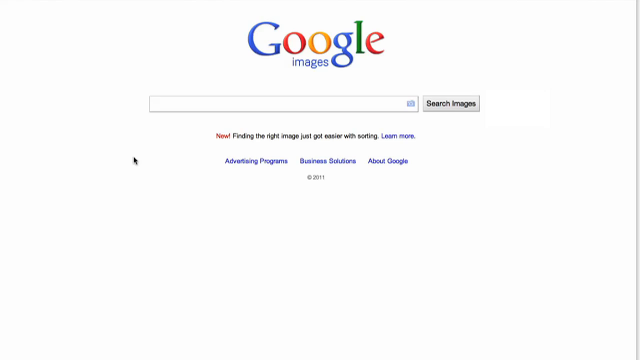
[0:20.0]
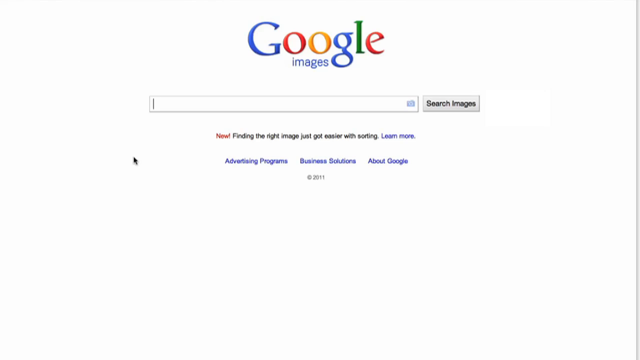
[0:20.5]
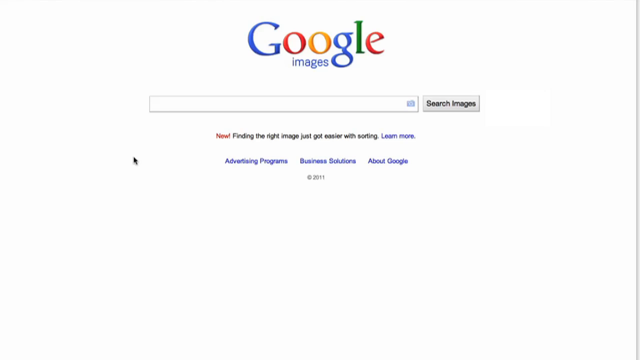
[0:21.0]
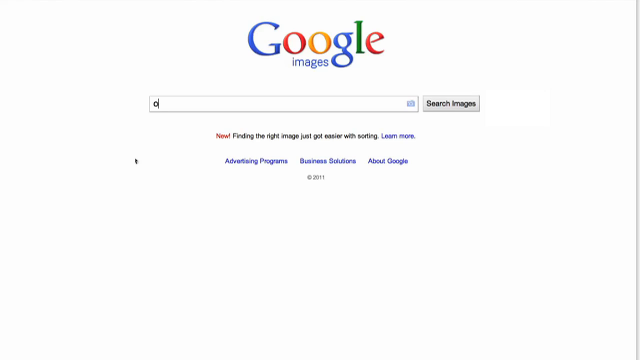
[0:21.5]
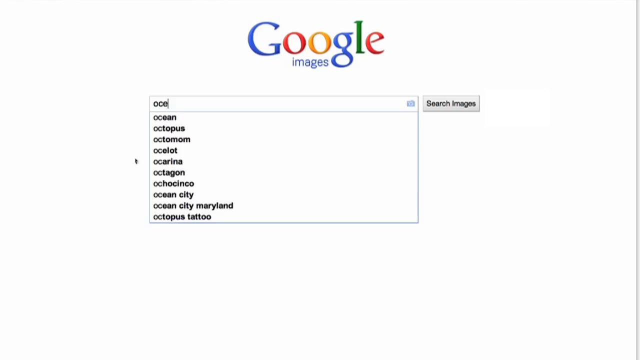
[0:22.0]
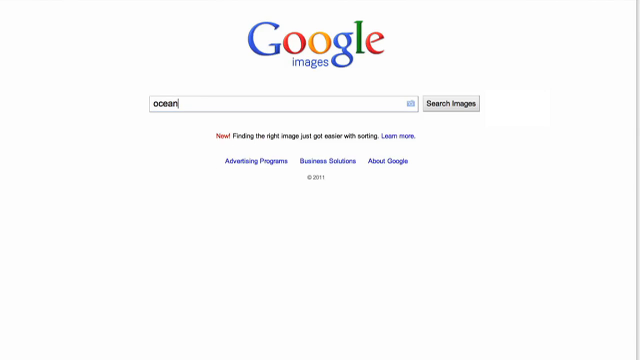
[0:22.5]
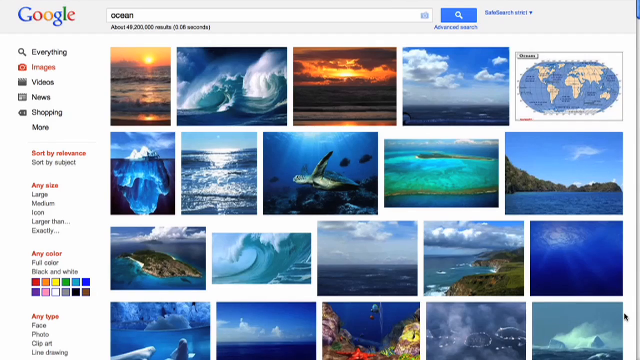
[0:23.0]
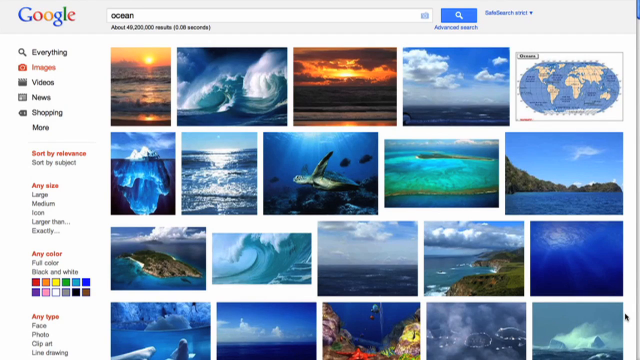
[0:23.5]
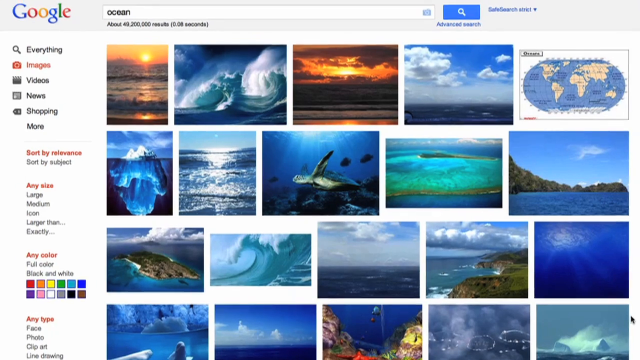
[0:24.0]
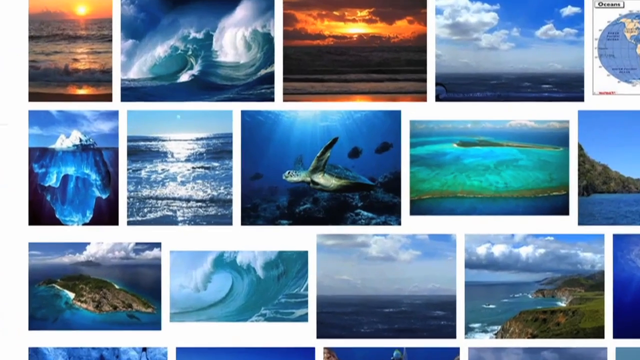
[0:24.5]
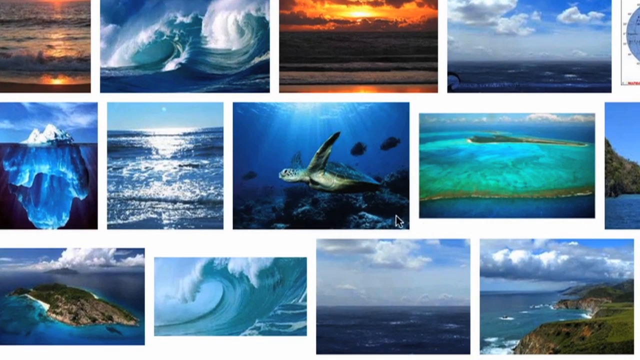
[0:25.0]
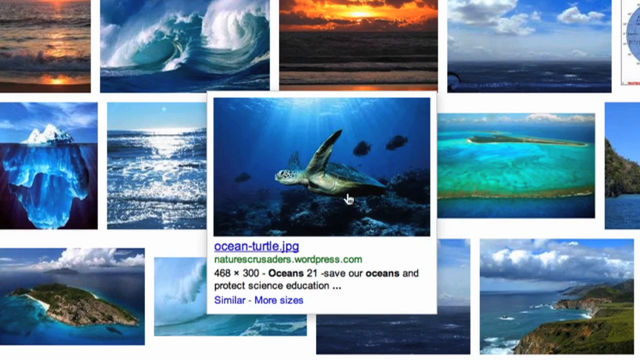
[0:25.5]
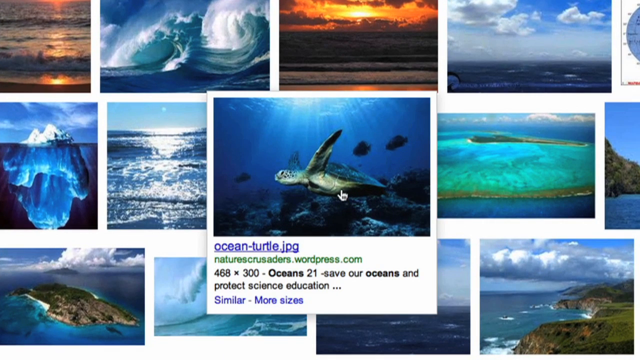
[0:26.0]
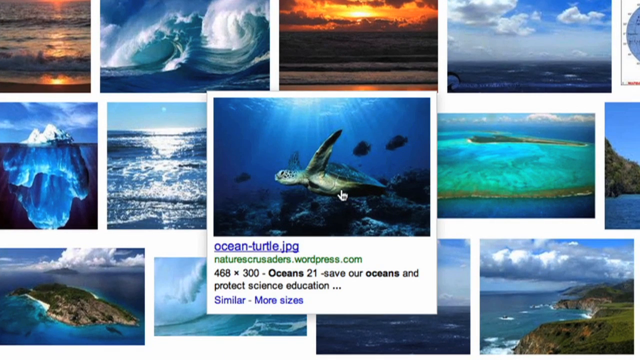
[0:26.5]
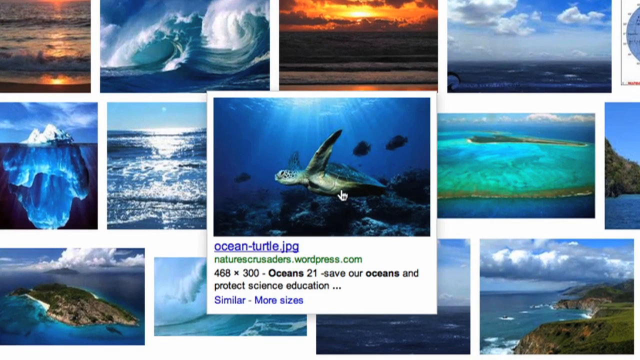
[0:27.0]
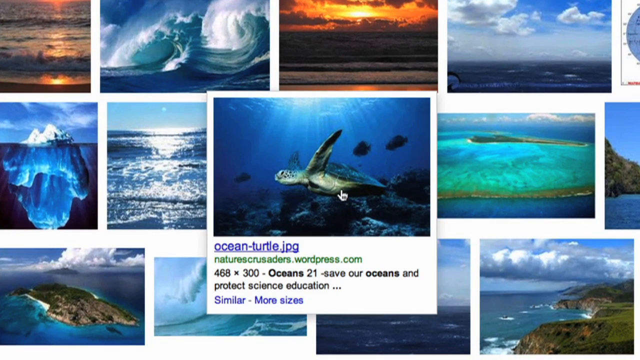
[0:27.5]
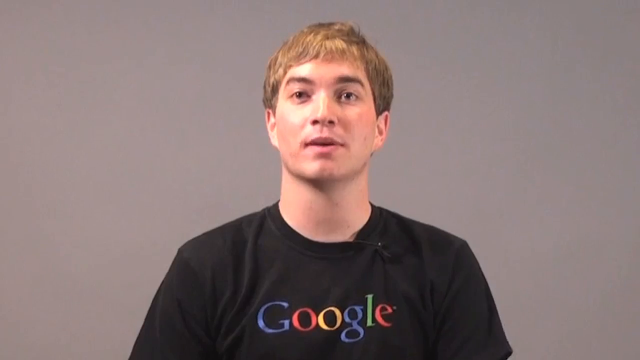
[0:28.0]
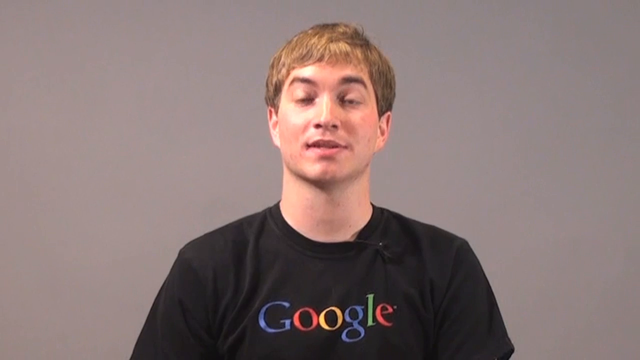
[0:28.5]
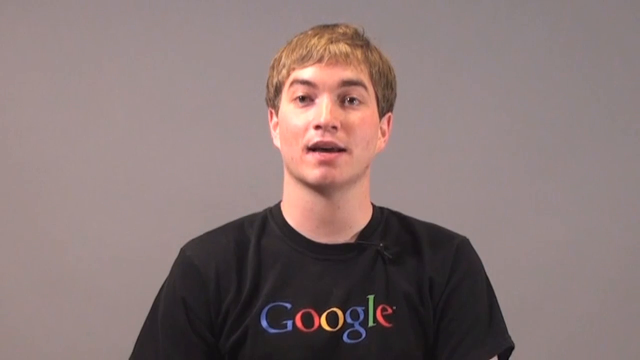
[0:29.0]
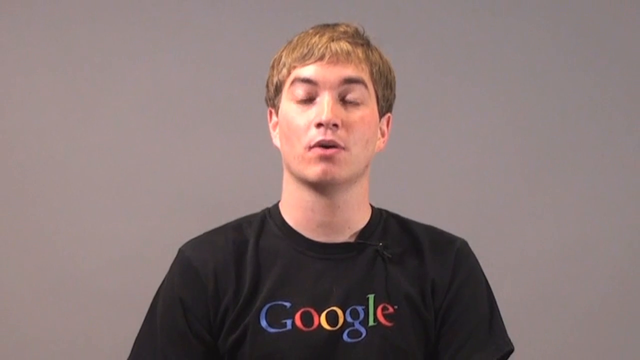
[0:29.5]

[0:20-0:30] The Google Images web page appears, with the Google Images logo. Below it is a white search bar with slight gray shadowing and a gray border, and next to it a light gray Search Images button with a dark gray border. Below is a basic line of text with one hyperlink, beginning with the word "new" in red. Below that are three basic footer hyperlinks, and beneath them footer information consisting of the copyright and the year. The man types "ocean" into Google Images, and the next screen shows an array of ocean images, most of them blue, along with links for videos, news, shopping and more. There are also tags for defining the color, size and relevance to search for. The cursor hovers over an image of a turtle, which enlarges.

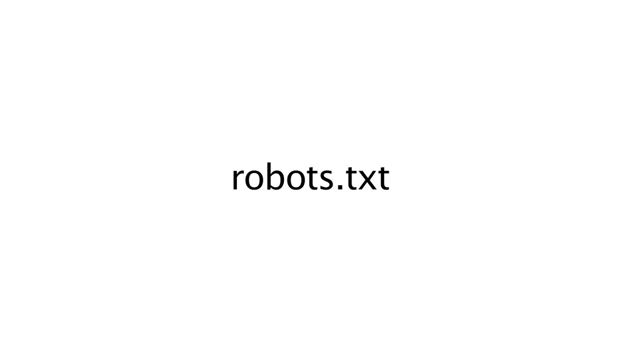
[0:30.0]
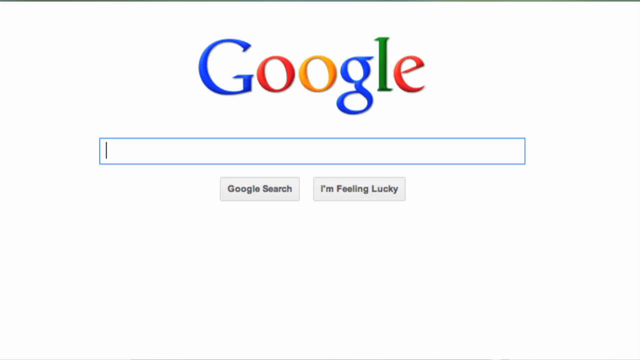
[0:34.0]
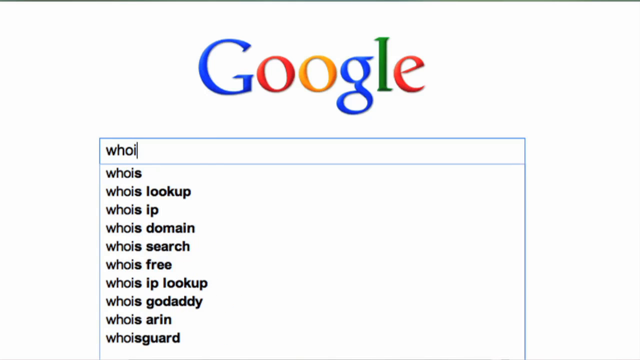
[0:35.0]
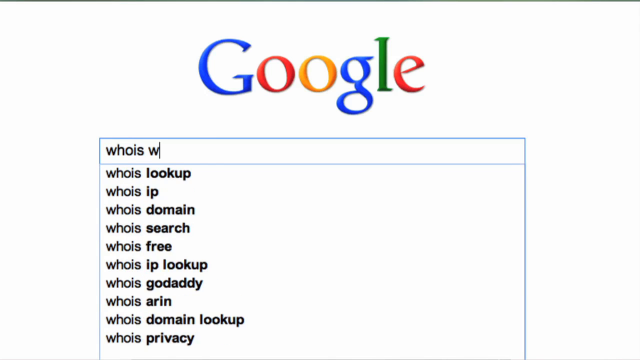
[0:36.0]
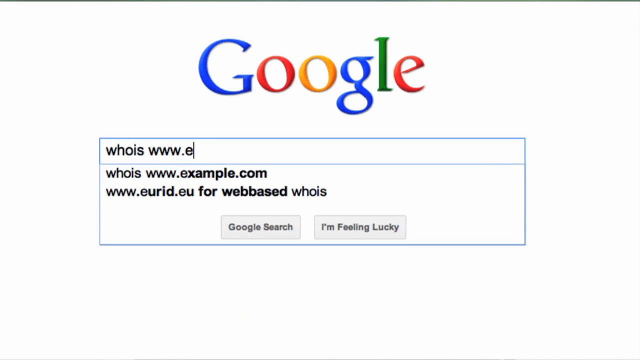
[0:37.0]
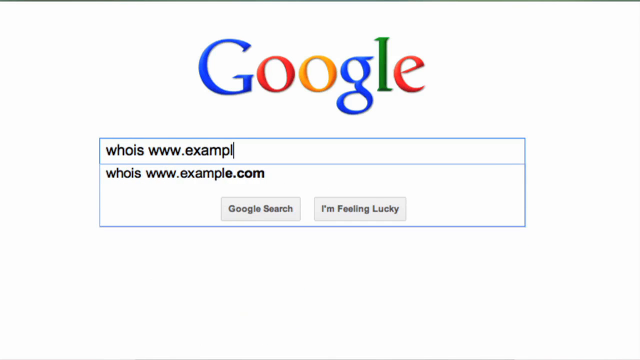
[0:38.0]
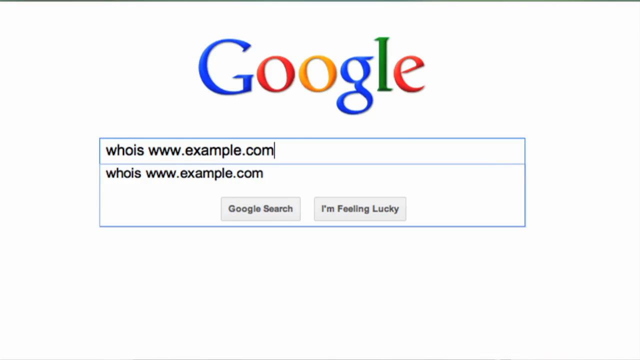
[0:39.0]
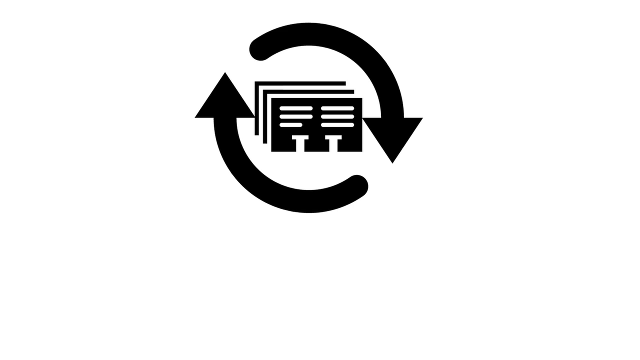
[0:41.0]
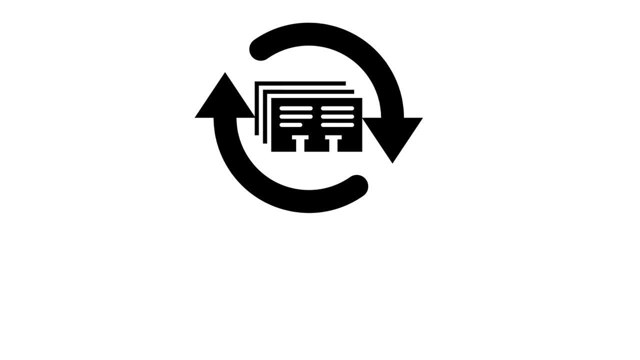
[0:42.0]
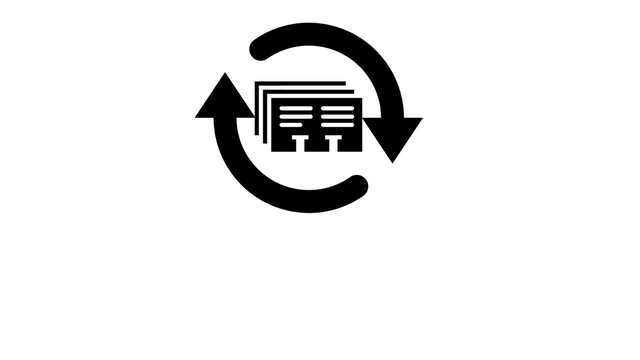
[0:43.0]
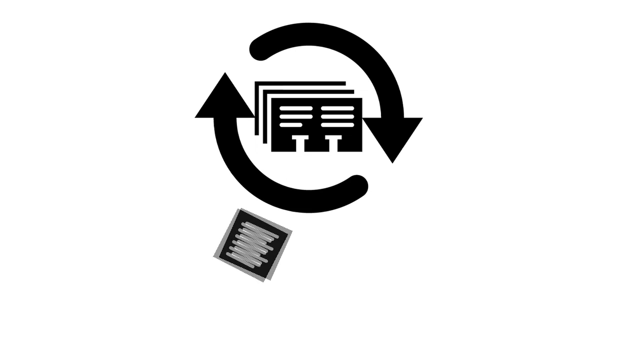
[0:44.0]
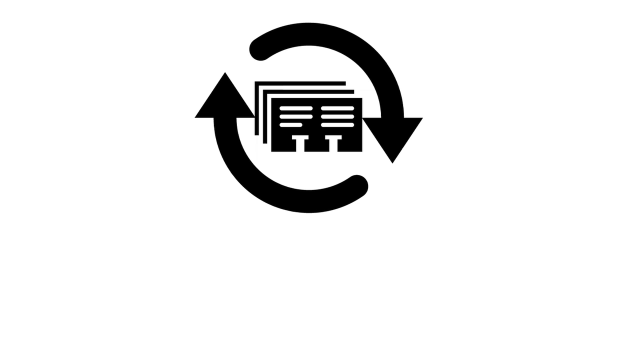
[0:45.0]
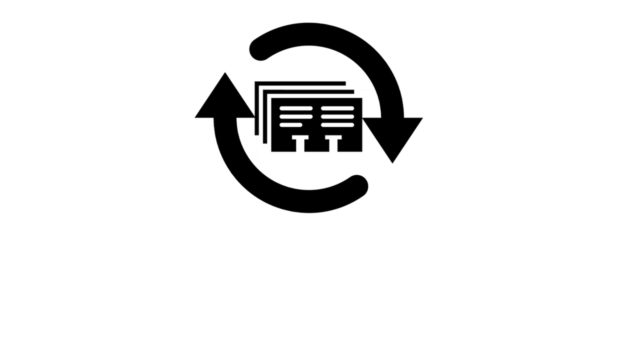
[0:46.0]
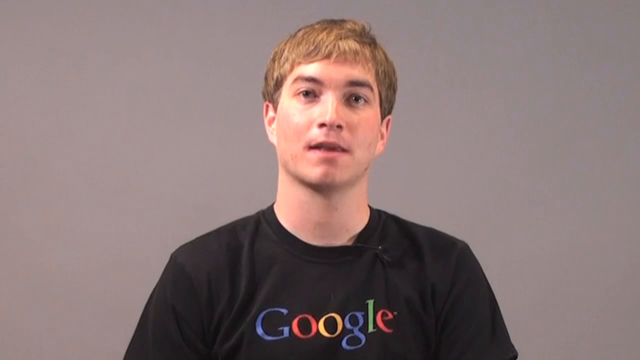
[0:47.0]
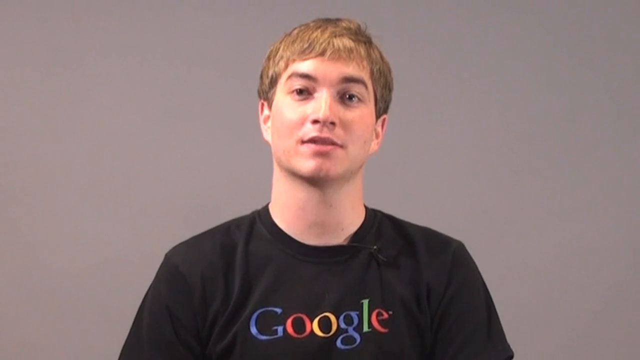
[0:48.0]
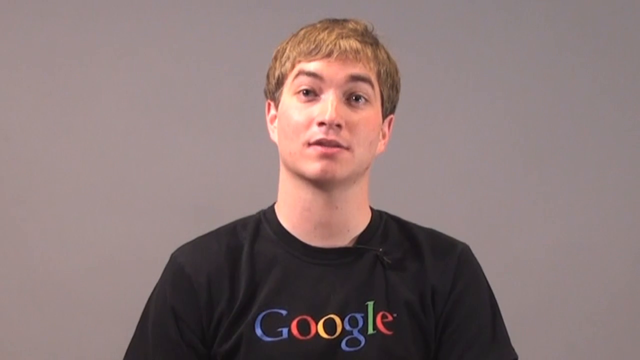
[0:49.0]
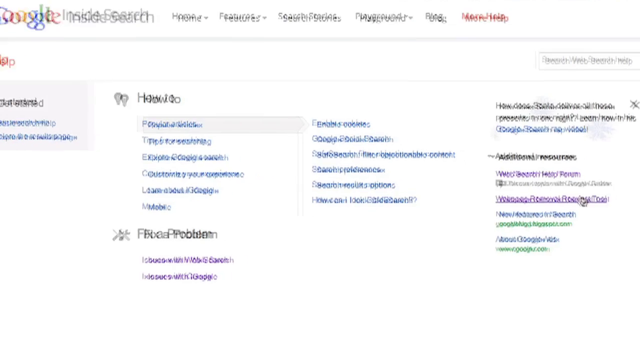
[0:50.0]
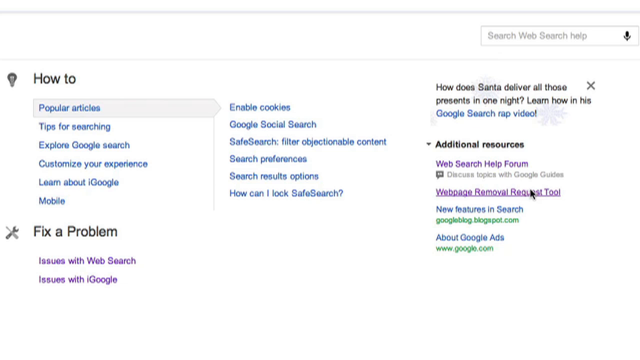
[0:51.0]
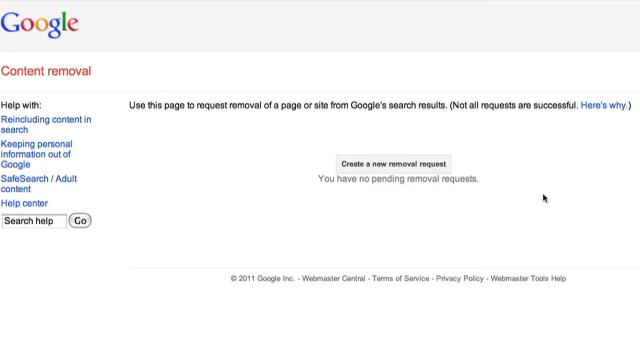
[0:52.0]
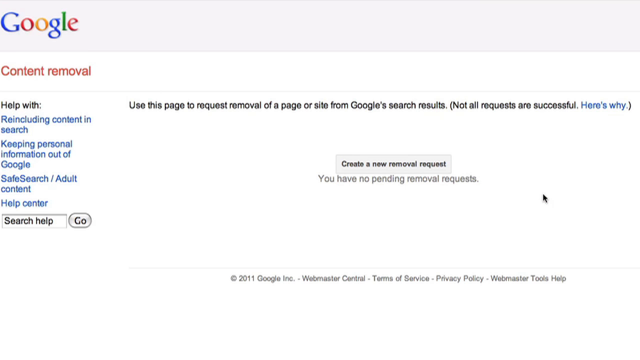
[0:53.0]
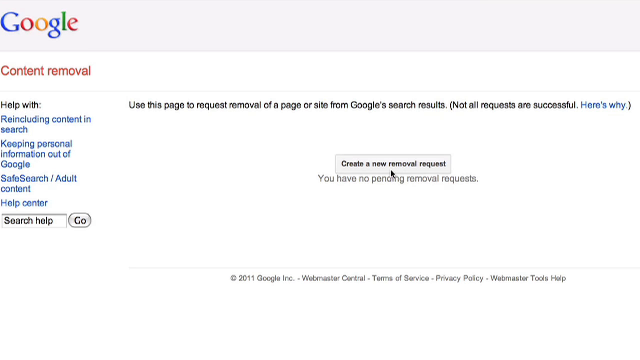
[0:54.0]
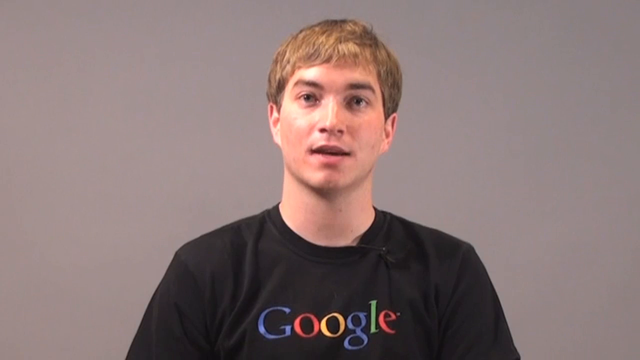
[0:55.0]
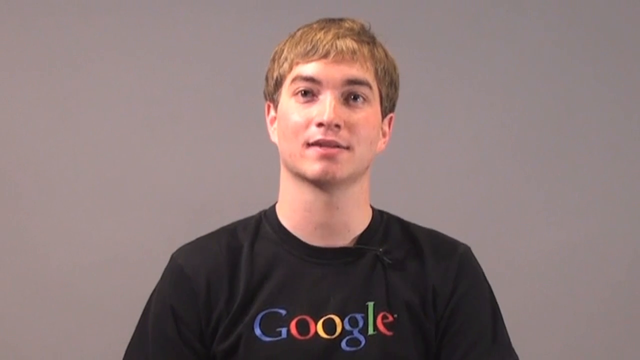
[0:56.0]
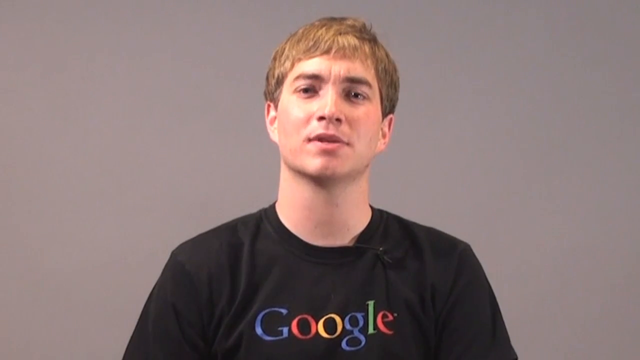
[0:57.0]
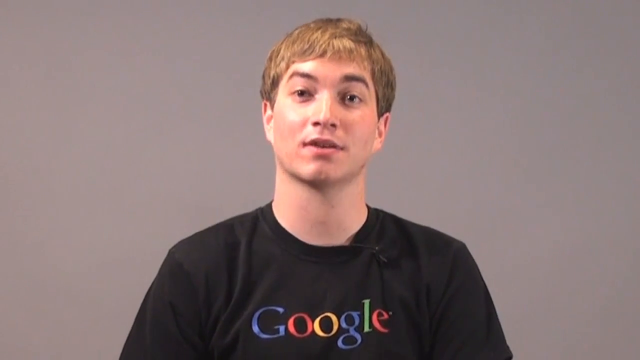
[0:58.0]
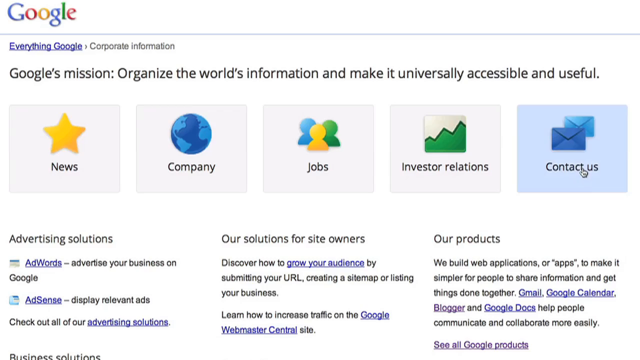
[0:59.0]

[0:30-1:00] A white screen shows the word "robots.txt" in plain black text. The screen remains for a while, then the default Google screen appears with the Google logo and the search bar. The man types "who is www.example.com". Next comes a white screen with a black icon that appears to be some kind of file system. Two arrows rotate around the icon at a fast speed until they come to a stop, and then what appears to be one file falls out of the file system. The man continues to talk, using engaging facial expressions. A screen appearing to be some kind of Google console is shown, followed by the man again, talking further. Another Google page follows, with a contact button that the cursor is highlighting, changing its background from light gray to light blue.